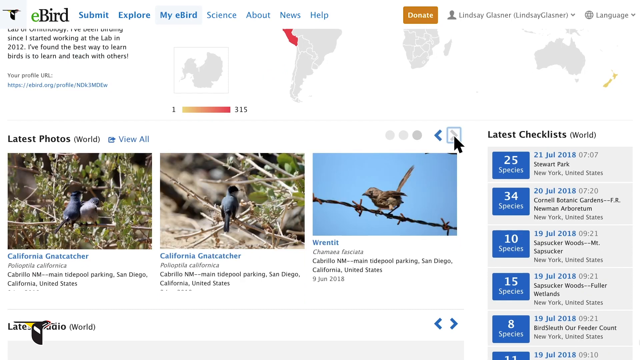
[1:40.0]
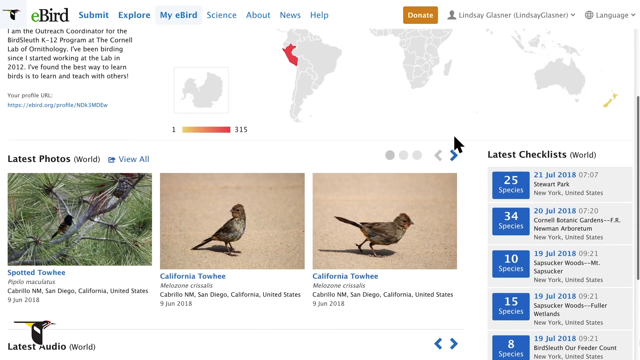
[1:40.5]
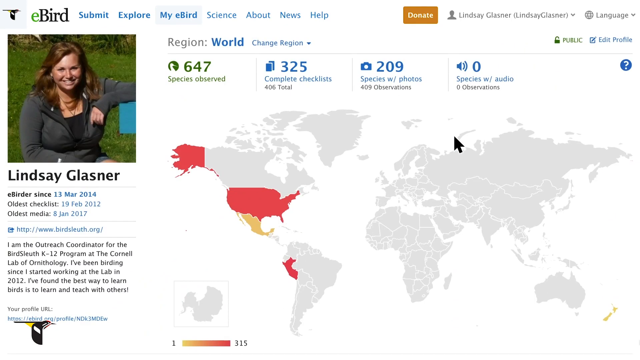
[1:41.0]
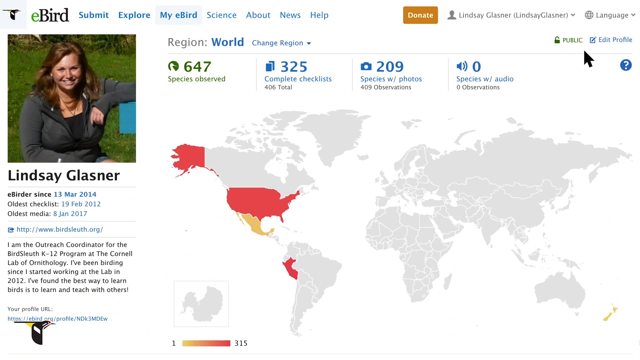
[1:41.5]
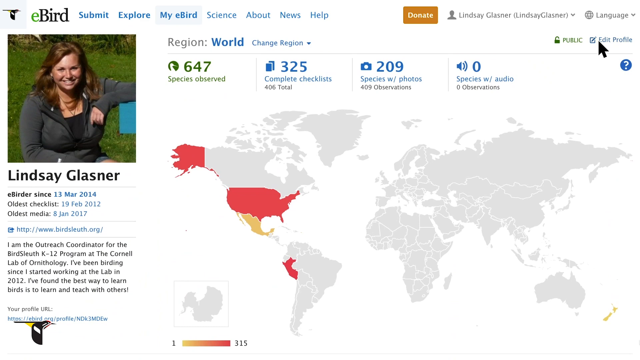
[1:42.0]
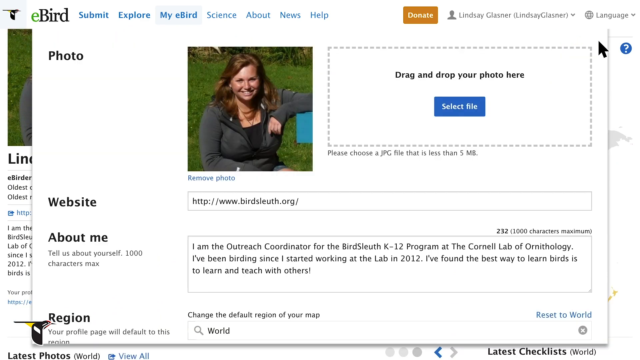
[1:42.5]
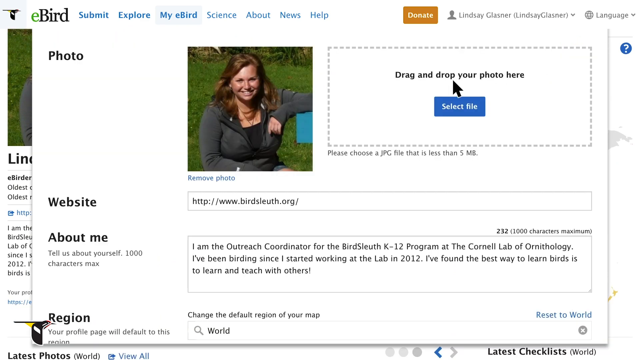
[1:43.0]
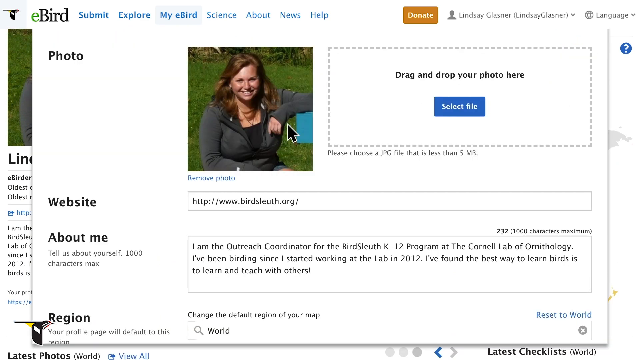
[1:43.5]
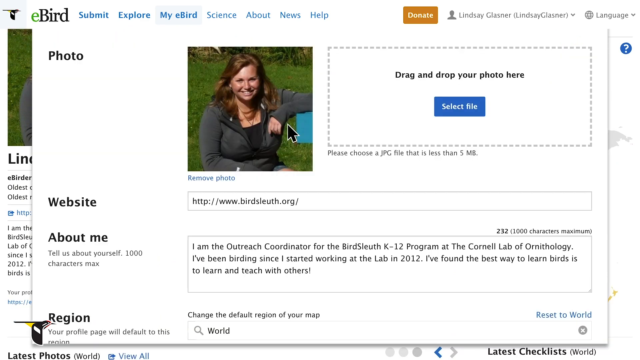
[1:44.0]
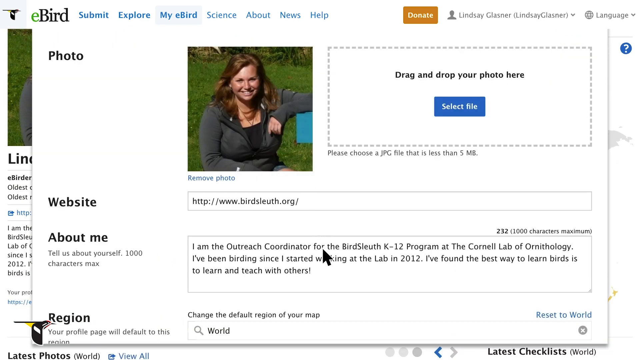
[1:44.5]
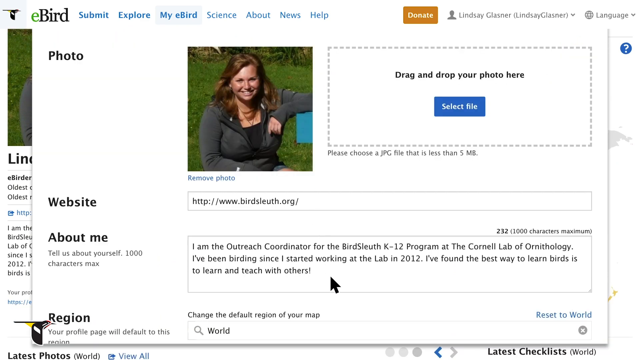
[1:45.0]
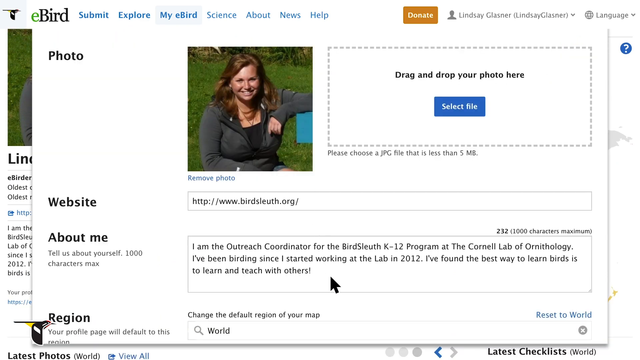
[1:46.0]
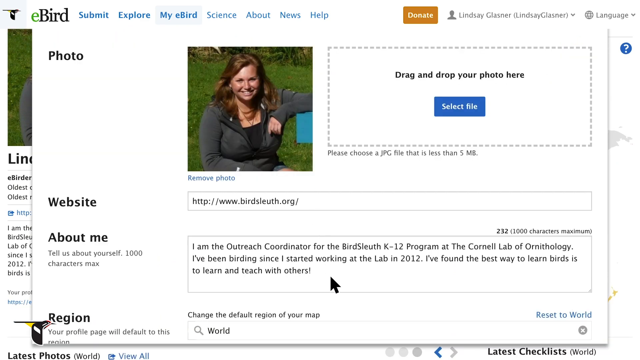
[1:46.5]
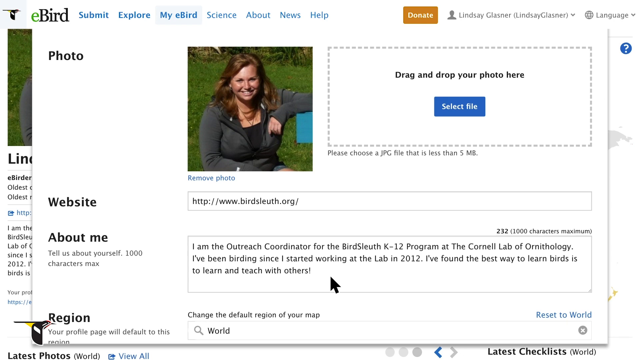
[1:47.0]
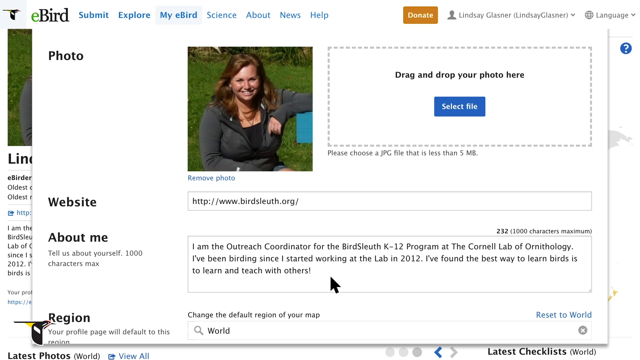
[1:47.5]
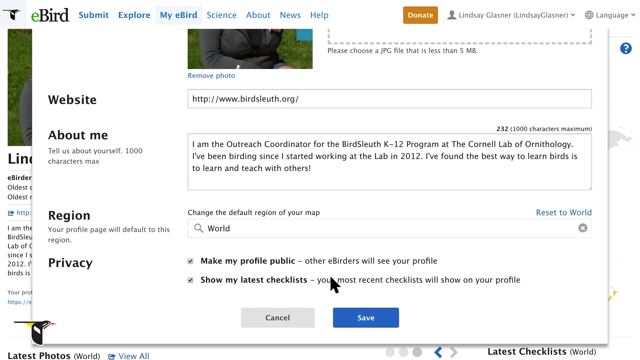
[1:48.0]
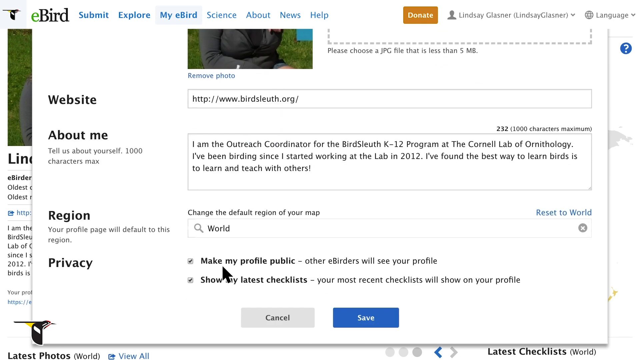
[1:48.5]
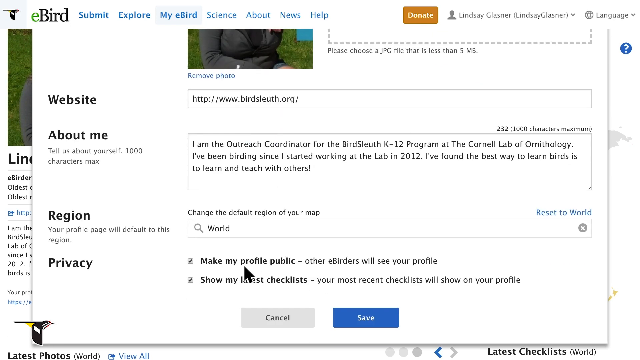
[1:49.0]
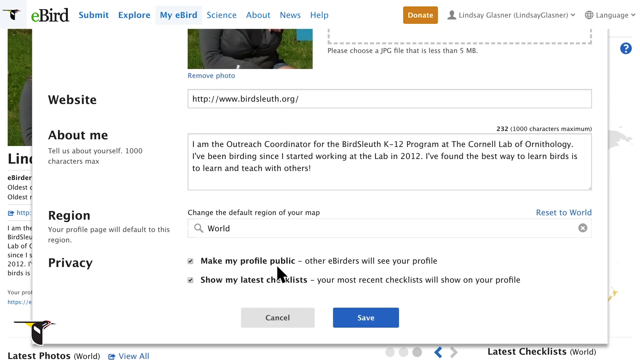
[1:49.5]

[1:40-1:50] The page scrolls back up and the "Edit Profile" button near the top right corner is clicked. On the left side is a photo, then a big gap, and about midway down it reads "Website," with "about me" right below. An image is to the right, and to the right of that is a rectangle for dropping a photo, or a blue button reading "Select File." Under the photo it reads "Remove Photo." Below are an area for a website link and bio information. The cursor moves to the picture, then down to the bio information, and the page scrolls down a little. Text says the default region of the map can be changed, with a small search bar. Below that, "Make My Profile Public" is checkmarked, and "Show My Latest Checklist" is also checkmarked. At the bottom is a gray "Cancel" button with a blue "Save" button to its right.